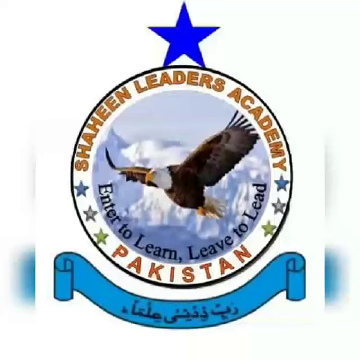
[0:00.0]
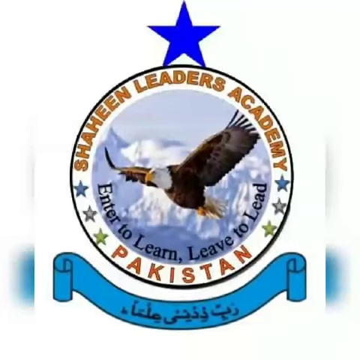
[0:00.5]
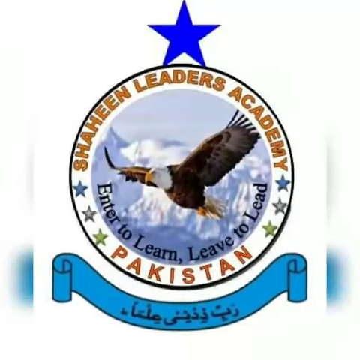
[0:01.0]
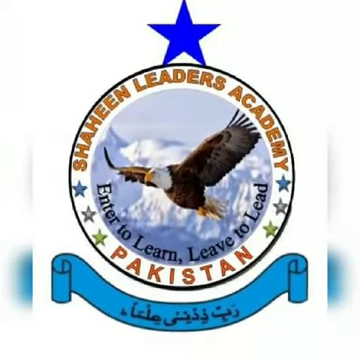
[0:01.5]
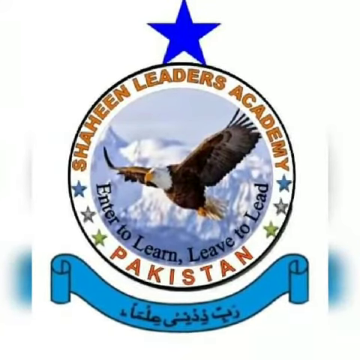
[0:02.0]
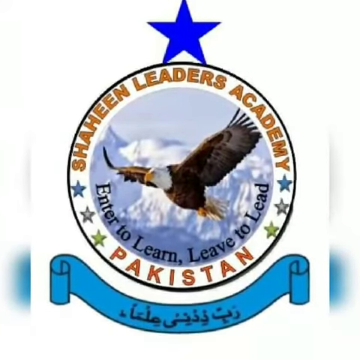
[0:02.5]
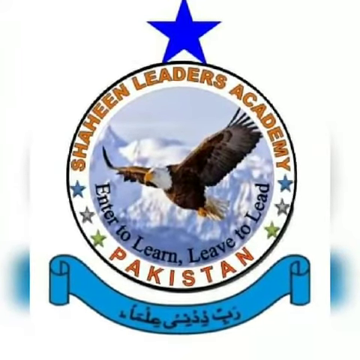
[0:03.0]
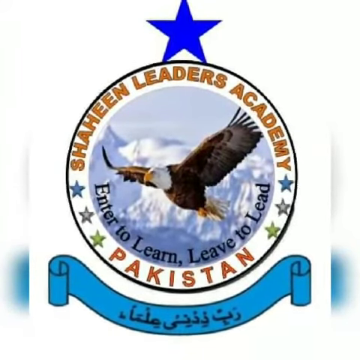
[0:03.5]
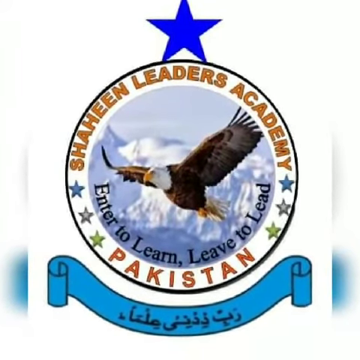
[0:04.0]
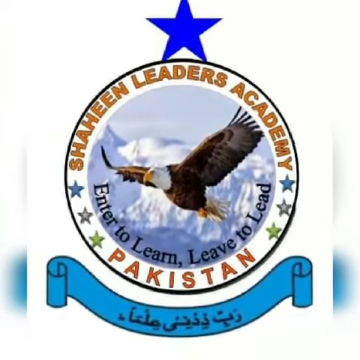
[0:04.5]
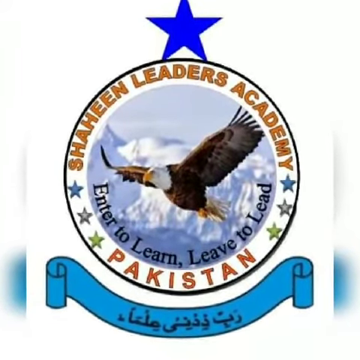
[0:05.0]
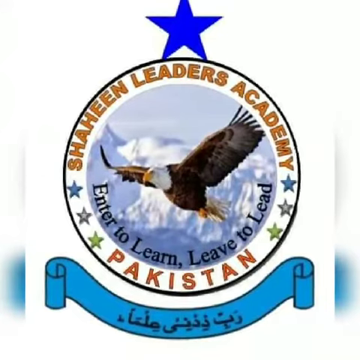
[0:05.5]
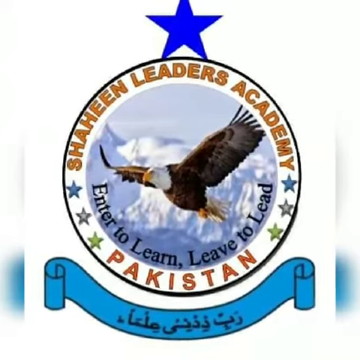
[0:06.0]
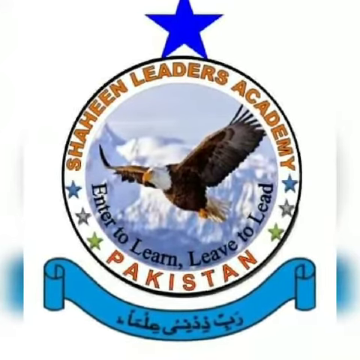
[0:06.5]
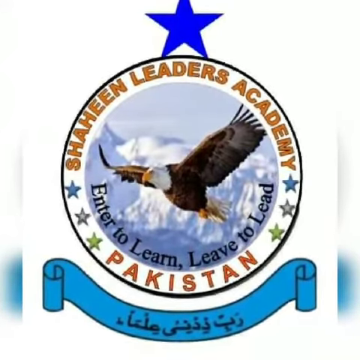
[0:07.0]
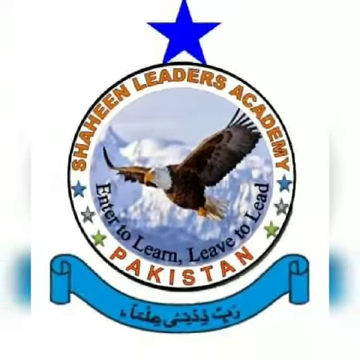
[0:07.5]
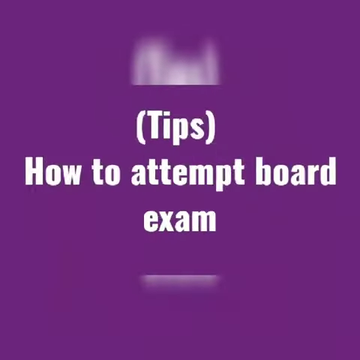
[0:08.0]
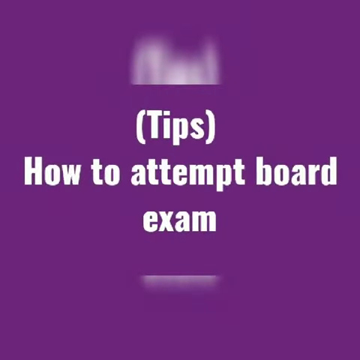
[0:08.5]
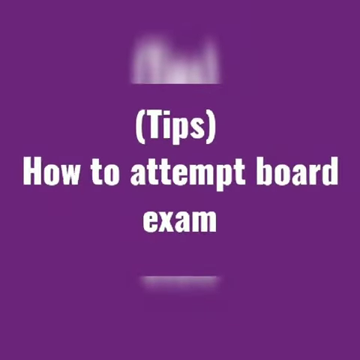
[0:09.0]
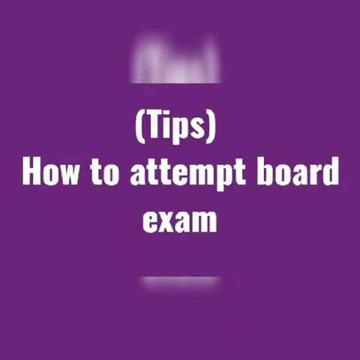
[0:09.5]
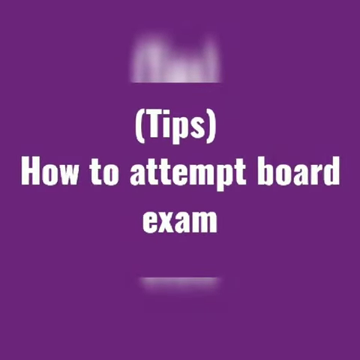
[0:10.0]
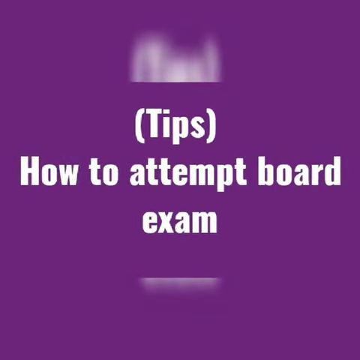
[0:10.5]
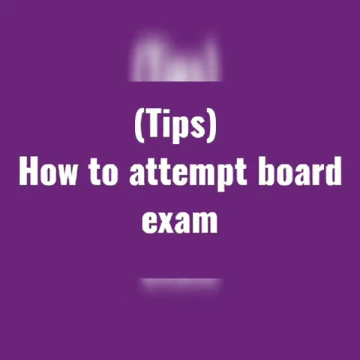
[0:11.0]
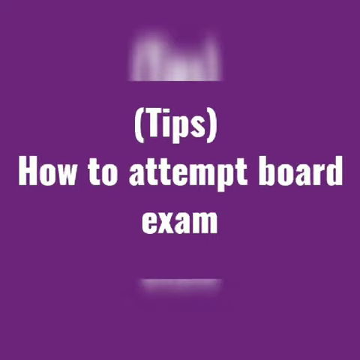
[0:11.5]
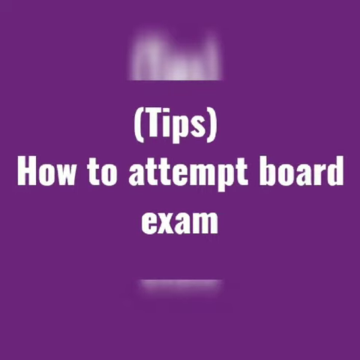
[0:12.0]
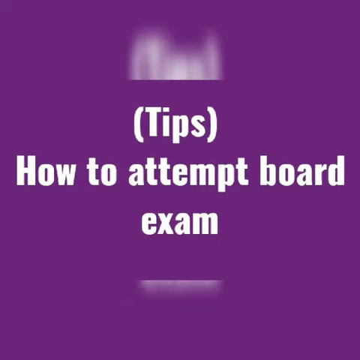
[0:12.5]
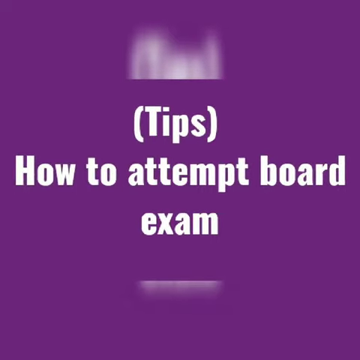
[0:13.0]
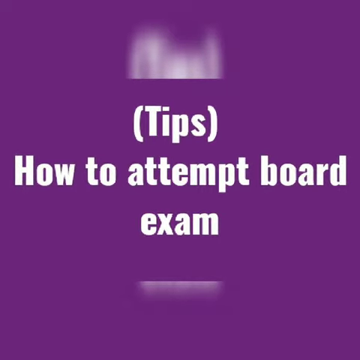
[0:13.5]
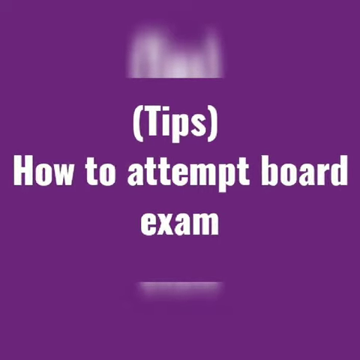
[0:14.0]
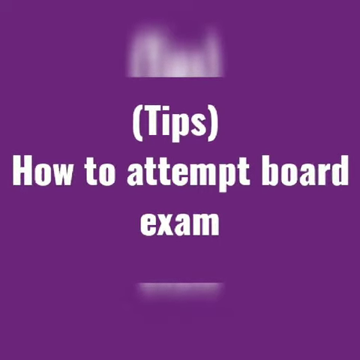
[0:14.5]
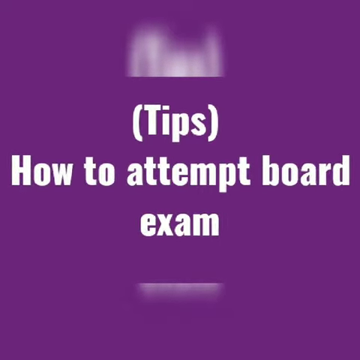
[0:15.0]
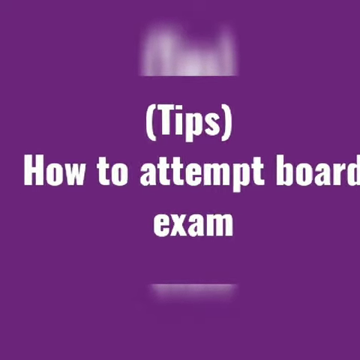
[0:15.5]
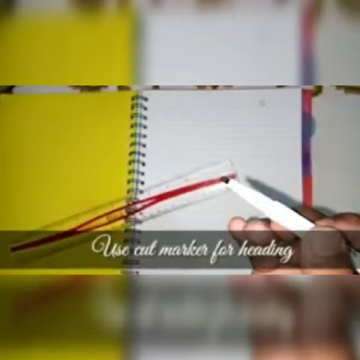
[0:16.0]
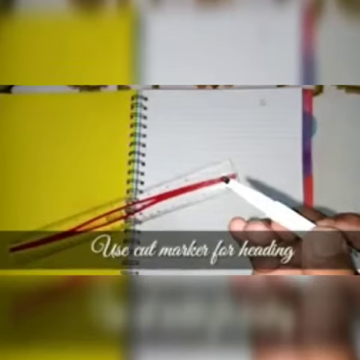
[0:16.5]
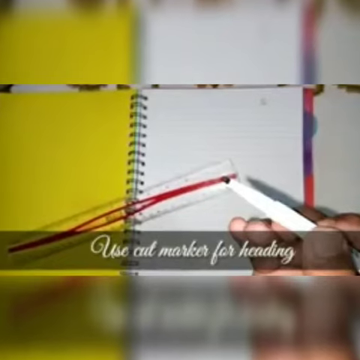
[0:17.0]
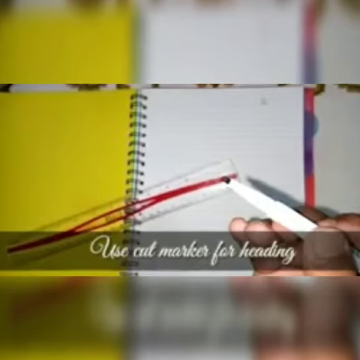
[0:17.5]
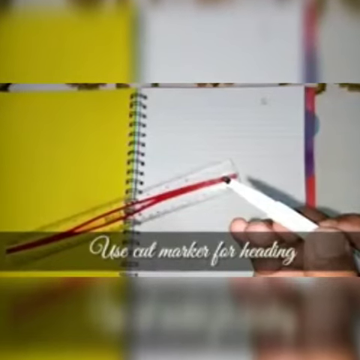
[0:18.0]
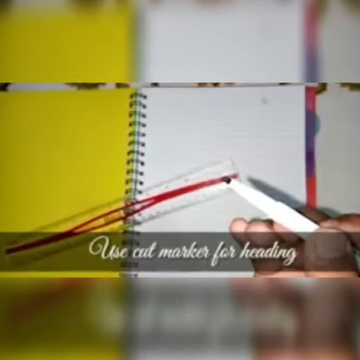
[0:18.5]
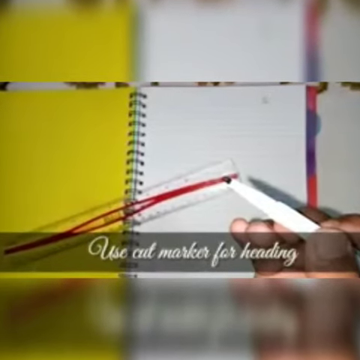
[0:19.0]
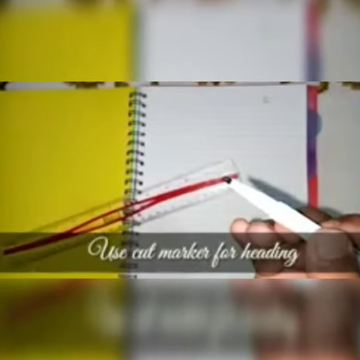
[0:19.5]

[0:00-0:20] A circular image appears with orange text at the top reading "Shaheen leaders Academy," followed by three stars, the word "Pakistan," and three more stars. Inside the circle is a picture of mountains with snow on them and a bald eagle flying with its wings spread. Black text reads "enter to learn leave to lead," and a blue banner carries writing that is maybe Arabic or something similar. A star is at the top of the circle. The screen then switches to a purple backdrop where text in parentheses reads "tips how to attempt board exam," with an almost blurry whiteness at the top and bottom. The scene switches again, blurry, to a spiral notebook, a ruler and a pen; nothing appears to be written in the notebook, which appears to be yellow. A caption reads "use cut marker for heading." The video looks like it is giving tips and tricks for how to pass or study for an exam.